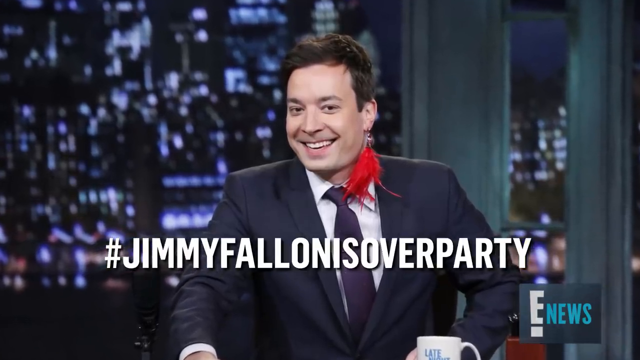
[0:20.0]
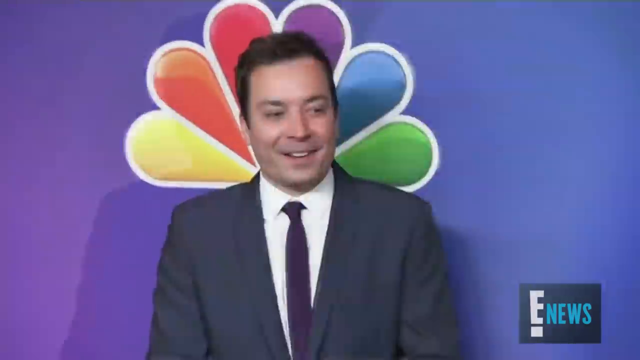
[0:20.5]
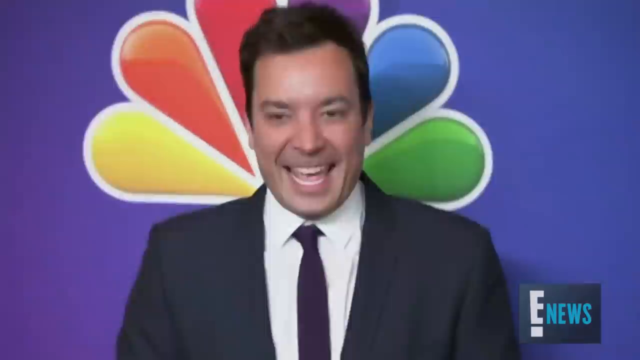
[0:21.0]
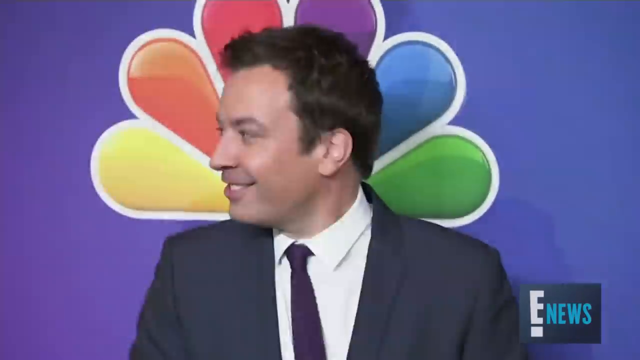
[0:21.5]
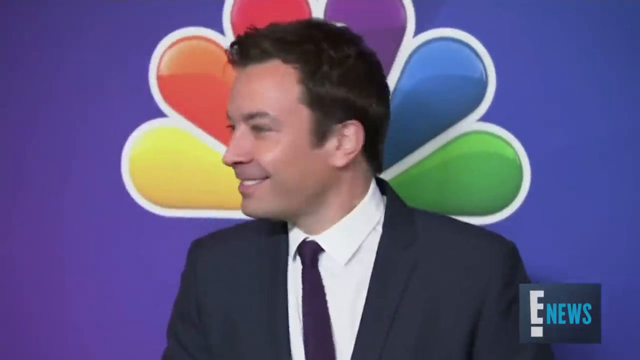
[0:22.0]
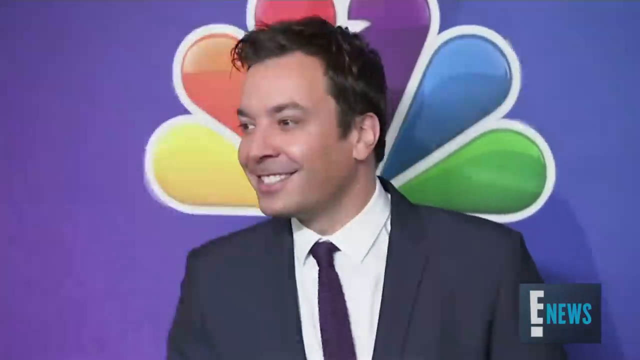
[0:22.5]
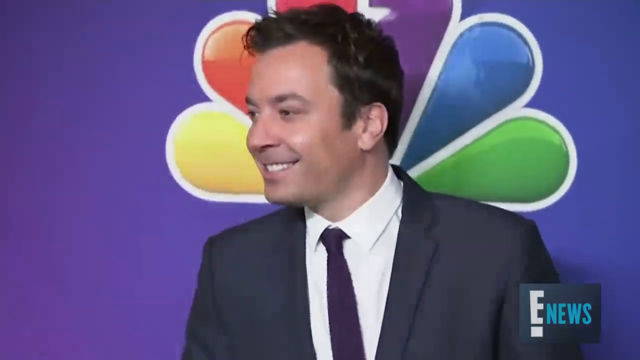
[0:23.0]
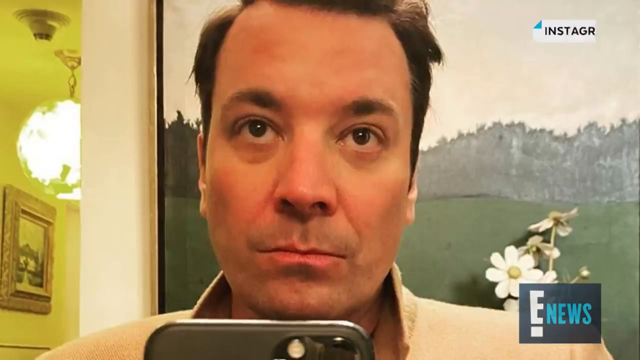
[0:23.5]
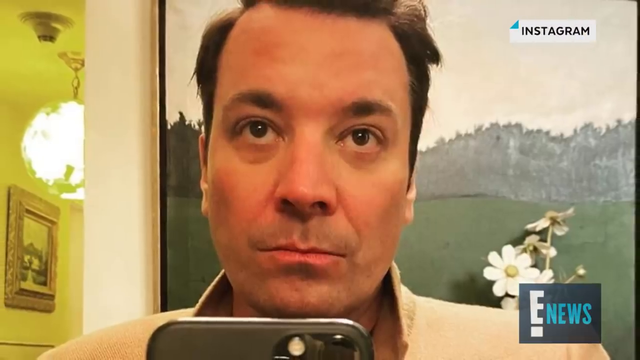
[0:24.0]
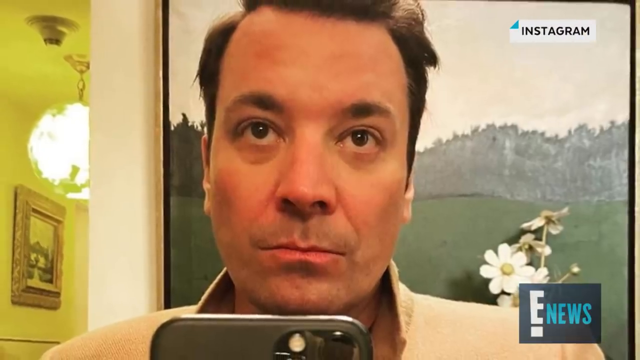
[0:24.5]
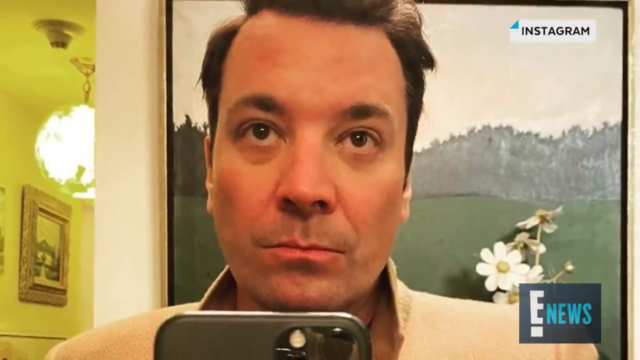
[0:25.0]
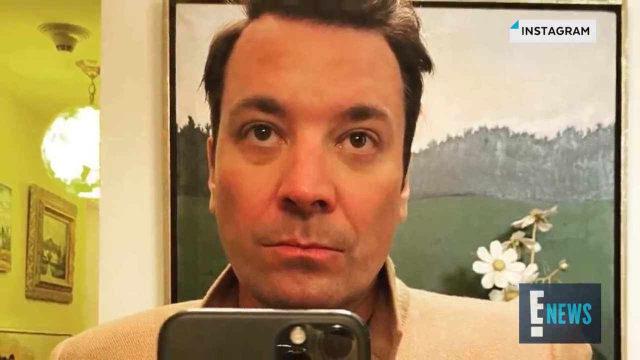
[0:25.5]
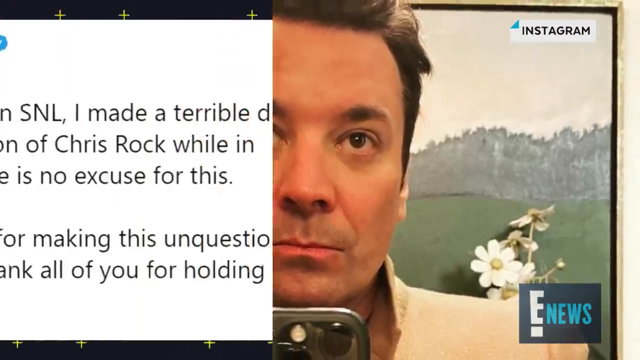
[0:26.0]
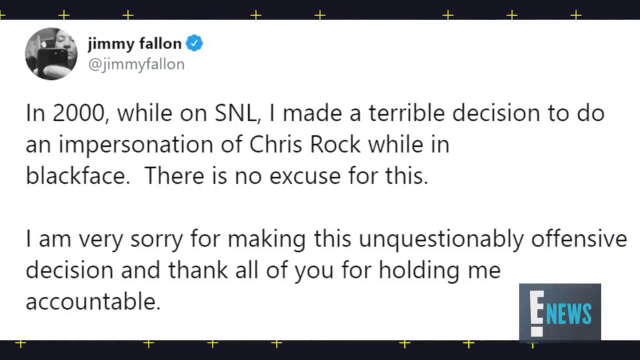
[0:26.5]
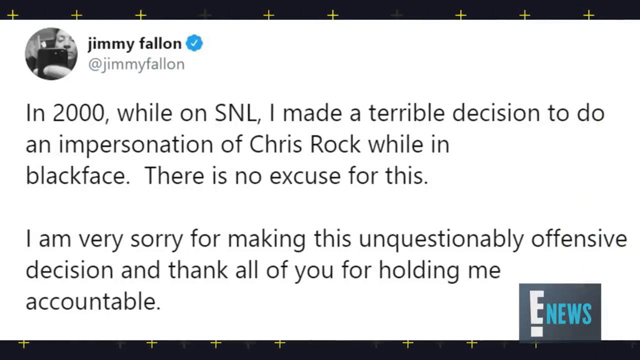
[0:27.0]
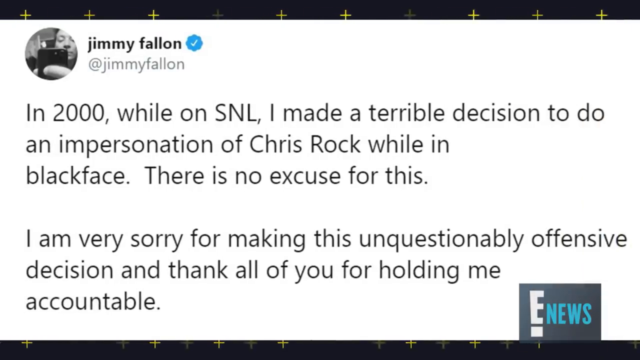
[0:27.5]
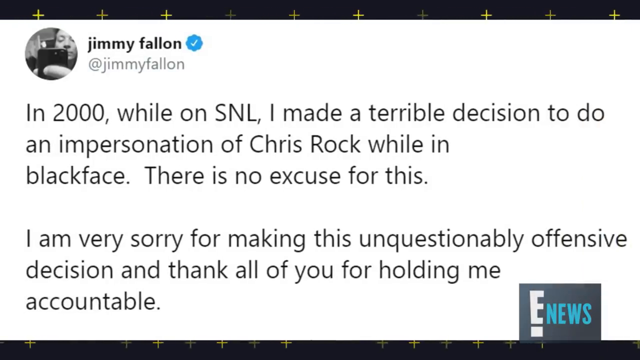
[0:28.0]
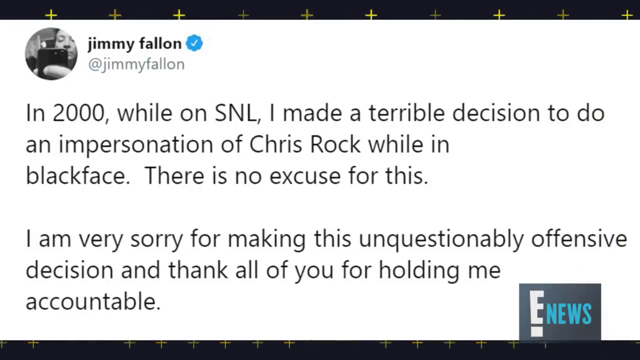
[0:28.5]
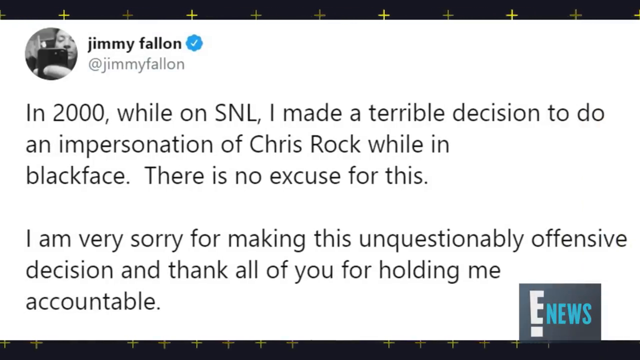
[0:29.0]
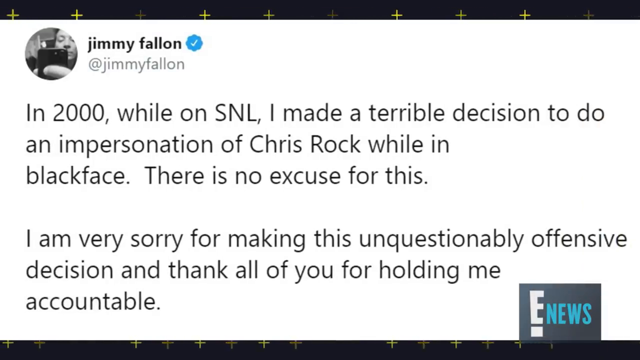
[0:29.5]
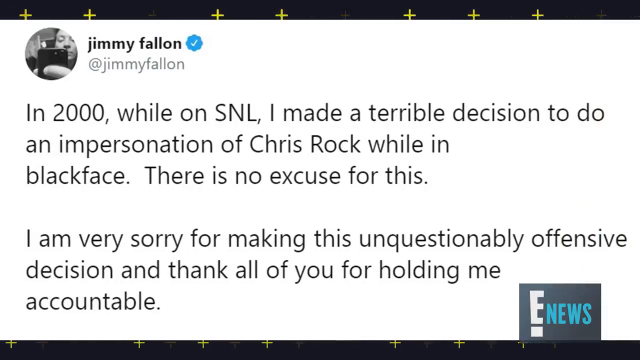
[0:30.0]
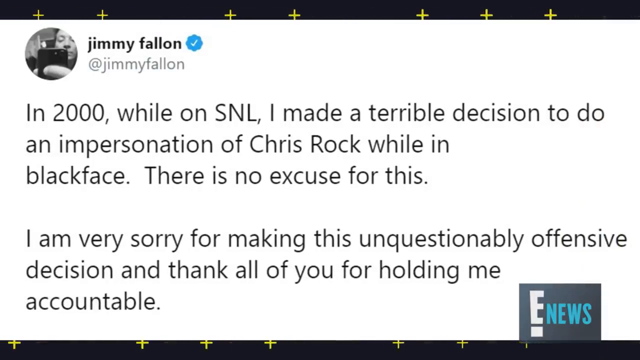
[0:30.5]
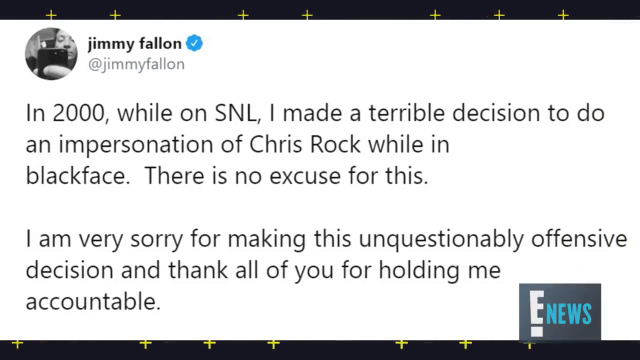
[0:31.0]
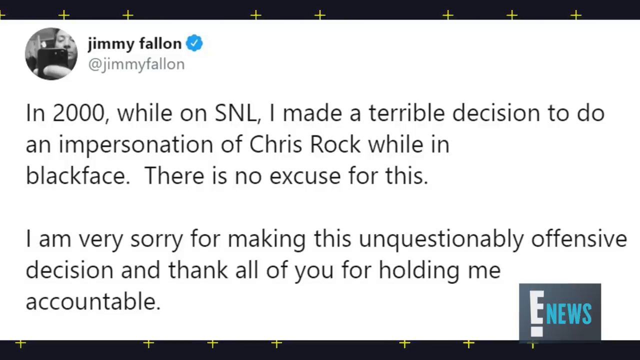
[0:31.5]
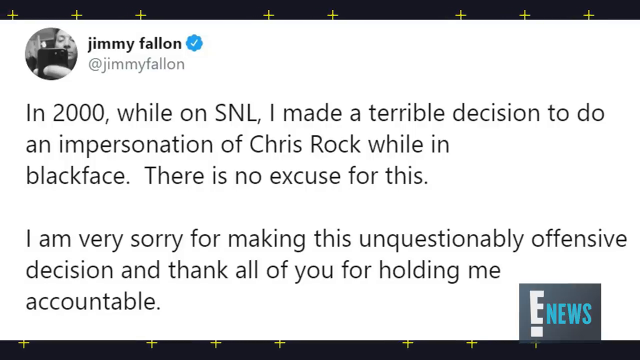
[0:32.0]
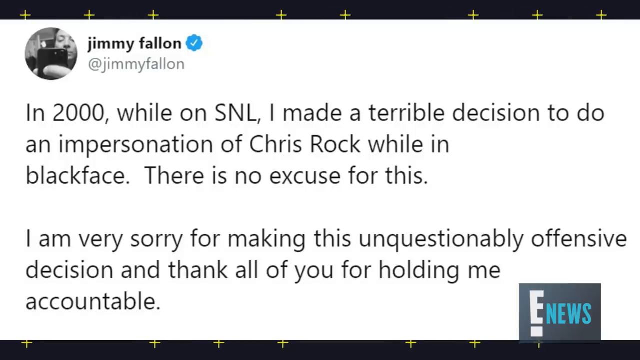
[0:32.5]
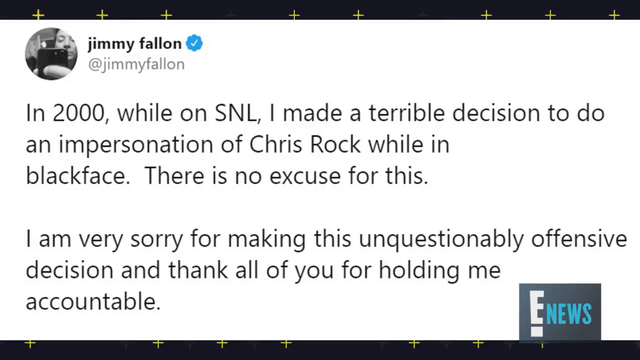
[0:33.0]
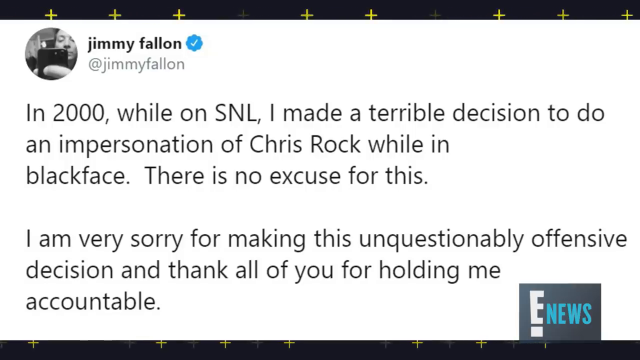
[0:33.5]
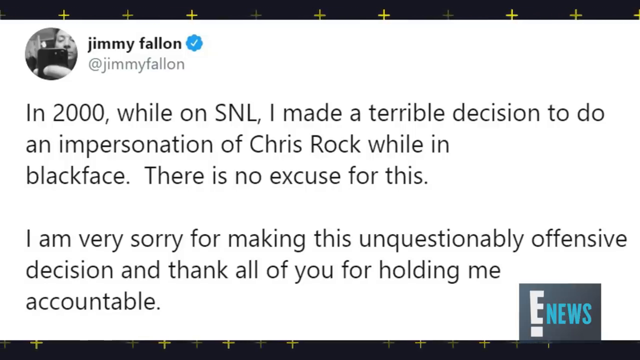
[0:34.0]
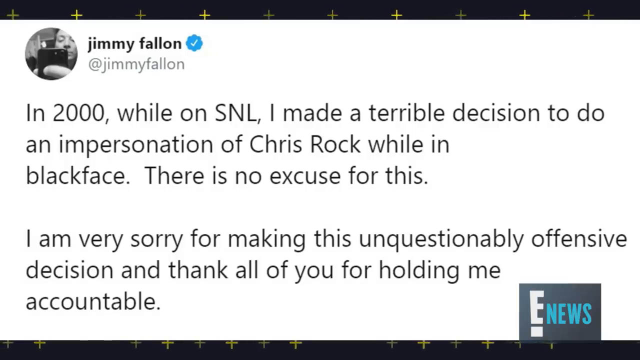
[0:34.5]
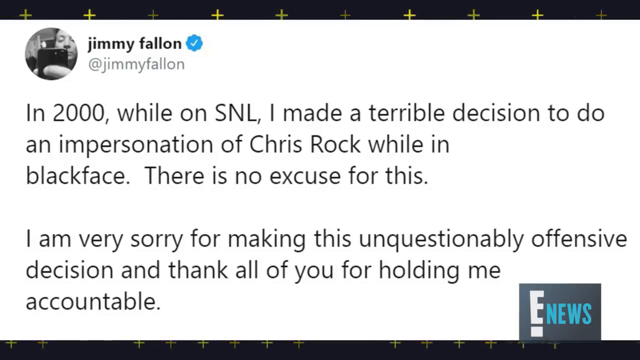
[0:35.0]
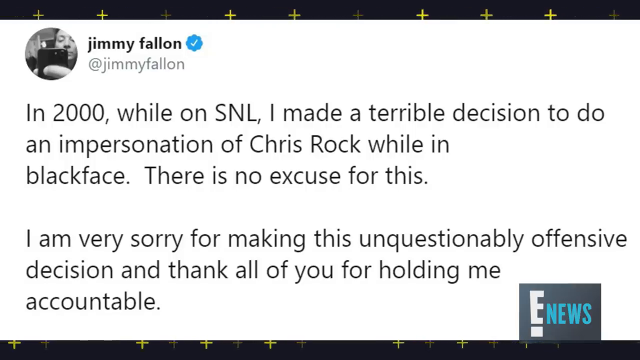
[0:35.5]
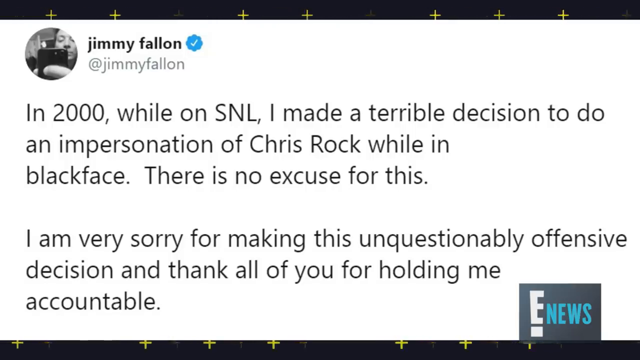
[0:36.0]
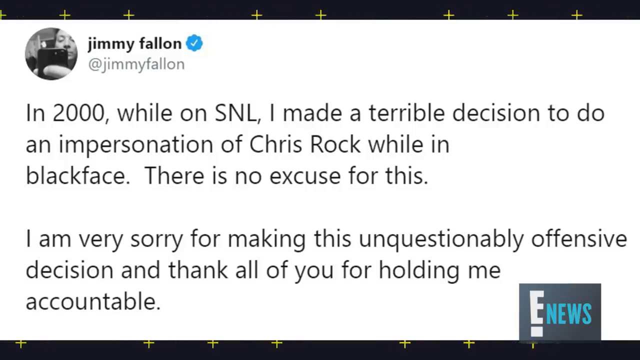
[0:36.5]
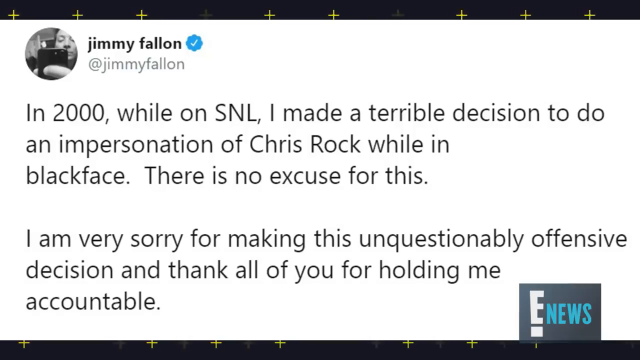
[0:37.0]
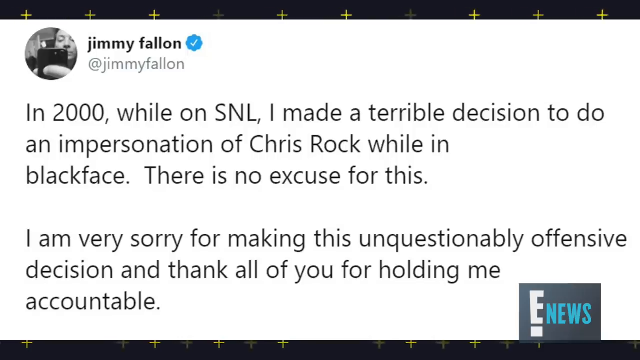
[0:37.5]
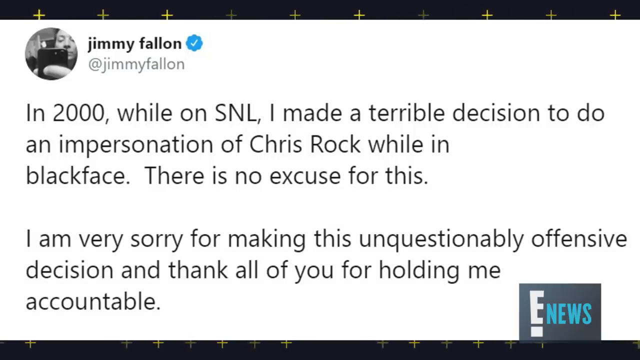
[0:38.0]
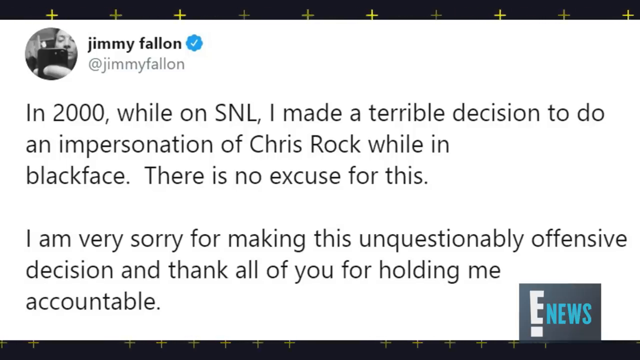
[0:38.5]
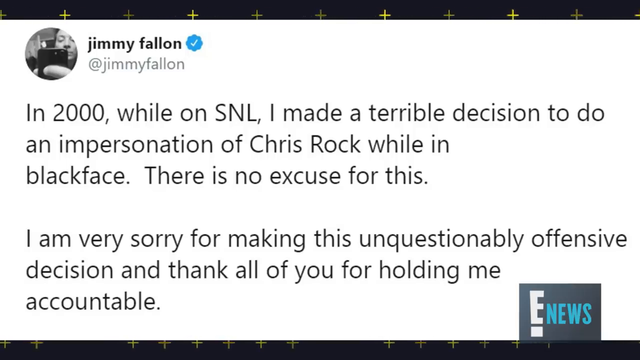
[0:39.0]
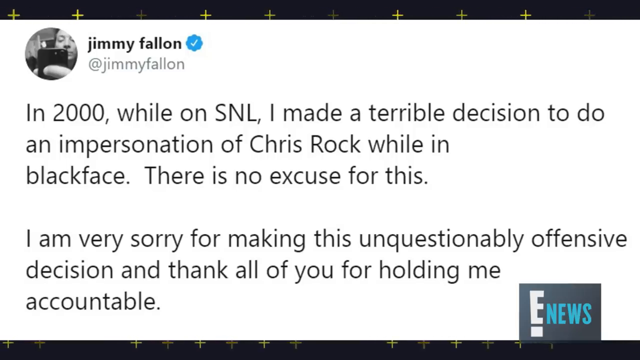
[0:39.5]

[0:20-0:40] A man looks directly into the camera, laughing and smiling, wearing a tuxedo with a tie and a red bow tie on the side. His background has lights and looks like a very nice building, and he looks like he is on a talk show, talking and responding. Next comes a close-up selfie of him looking directly at the camera with a neutral expression; he appears to be indoors, with a blurred wall and a plant in the background. The E-news logo is visible in the lower right corner, and some partially obscured text appears behind the image. An image on a phone shows a selfie frame displaying Jimmy's verified account and a tweet written in italics, apparently saying "I made a very bad decision." The E logo still appears at the bottom right.